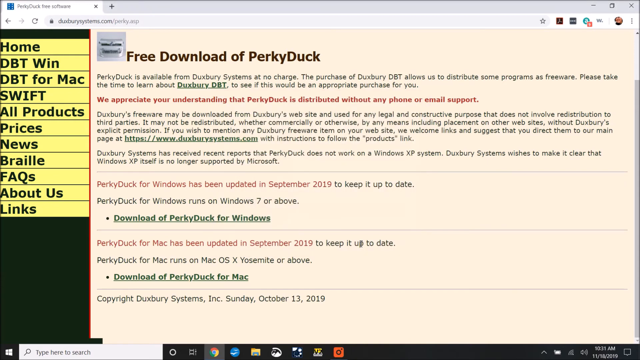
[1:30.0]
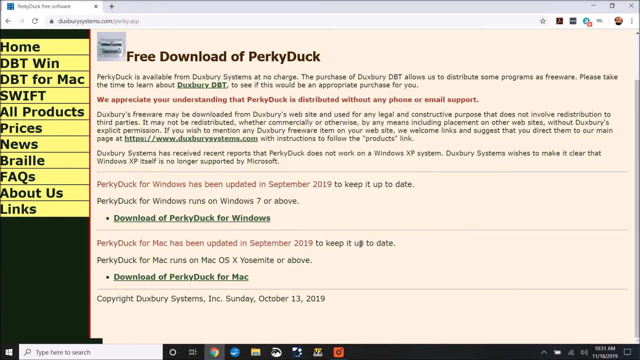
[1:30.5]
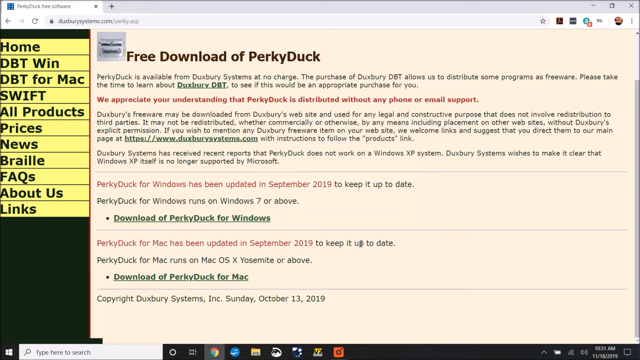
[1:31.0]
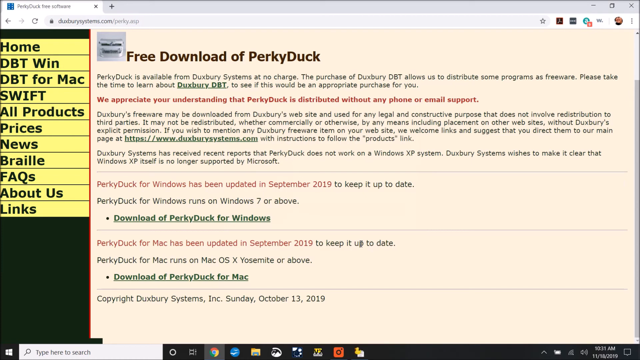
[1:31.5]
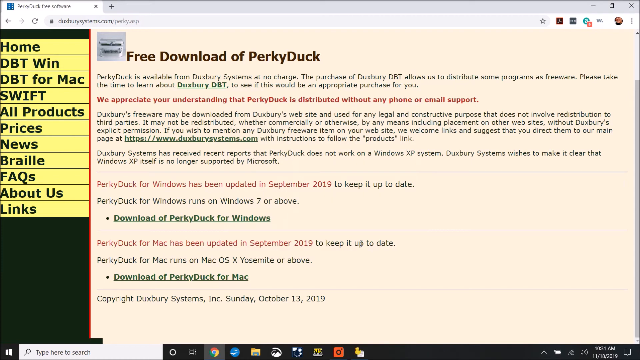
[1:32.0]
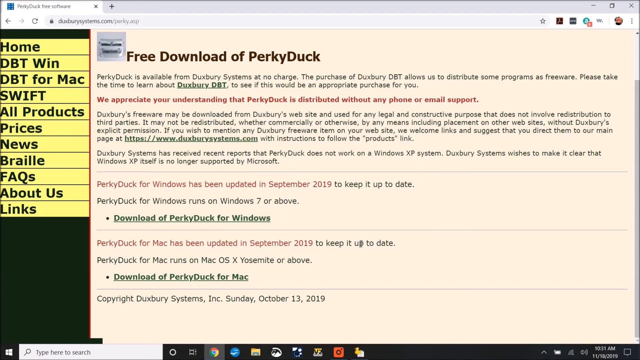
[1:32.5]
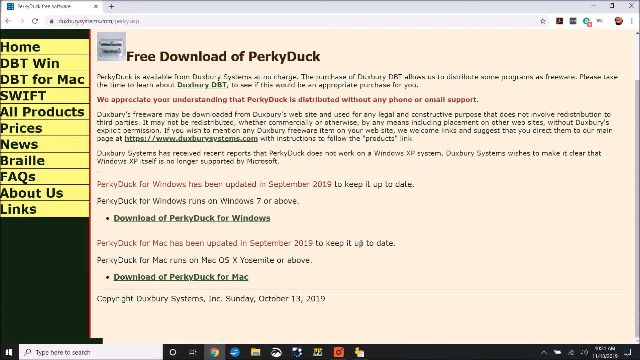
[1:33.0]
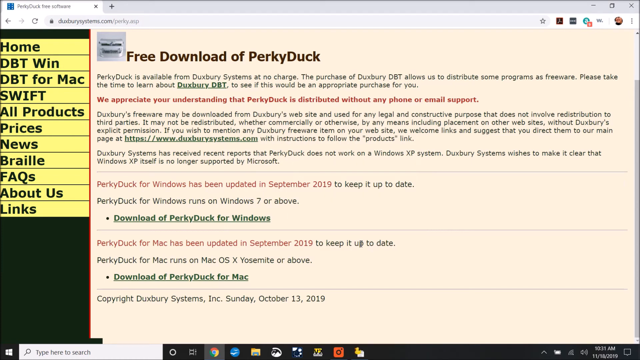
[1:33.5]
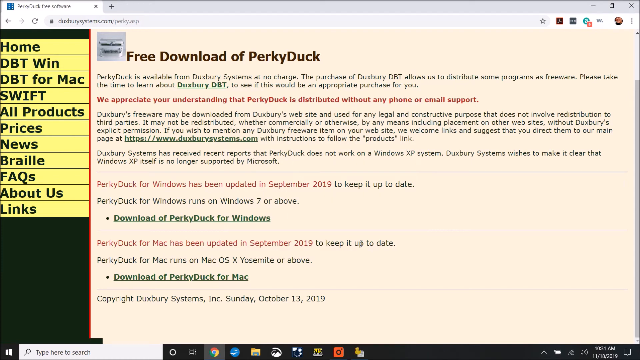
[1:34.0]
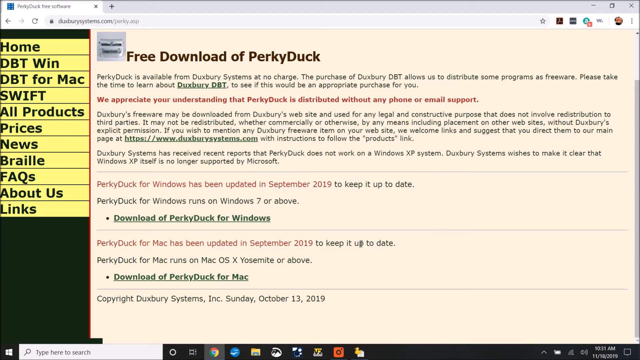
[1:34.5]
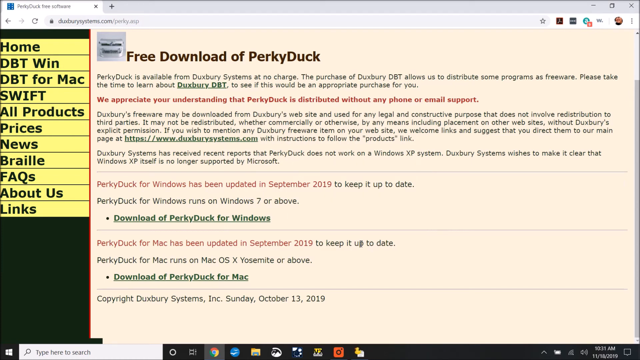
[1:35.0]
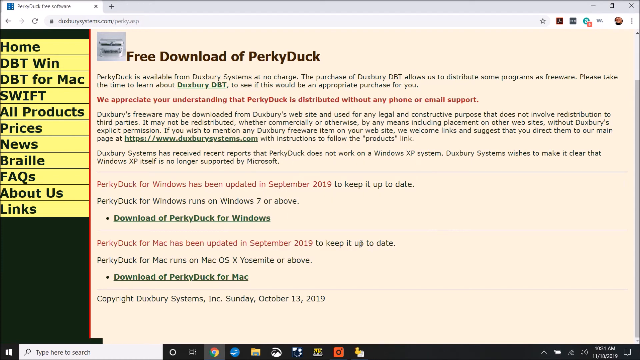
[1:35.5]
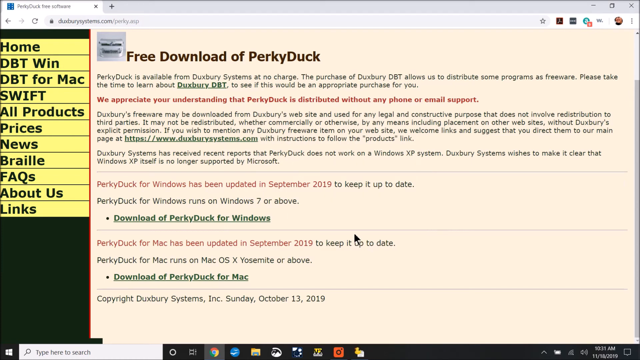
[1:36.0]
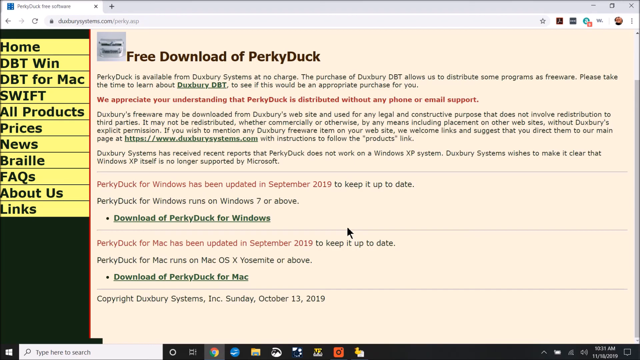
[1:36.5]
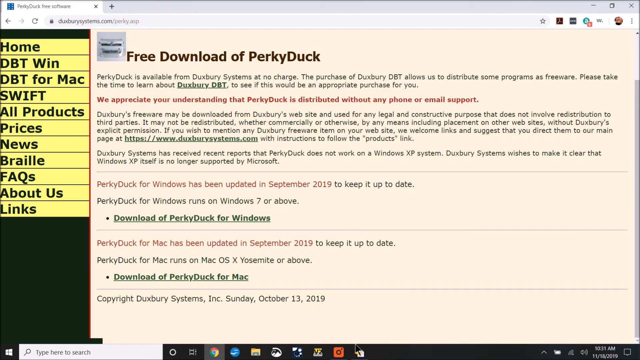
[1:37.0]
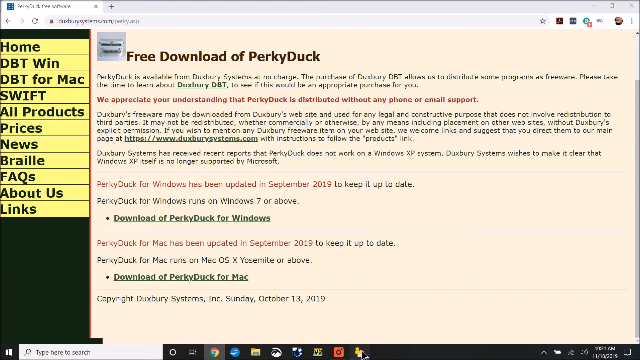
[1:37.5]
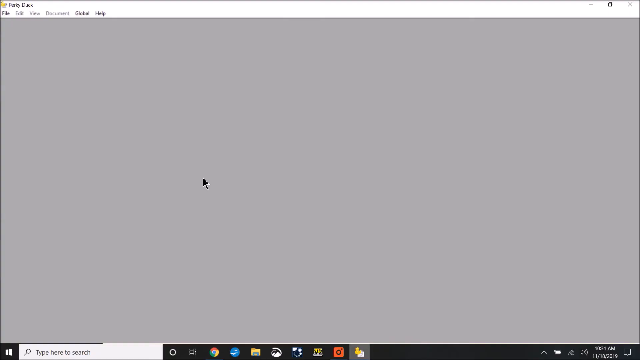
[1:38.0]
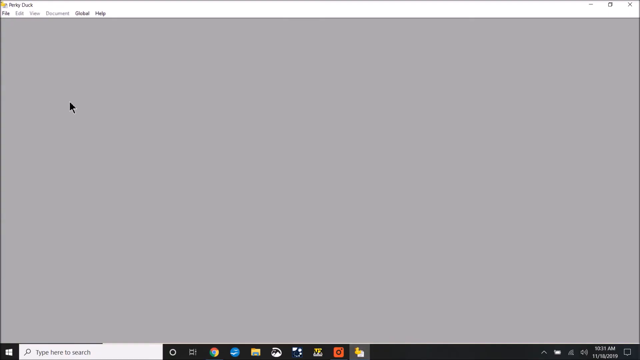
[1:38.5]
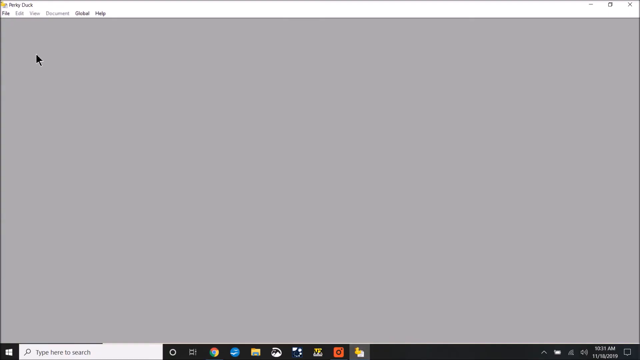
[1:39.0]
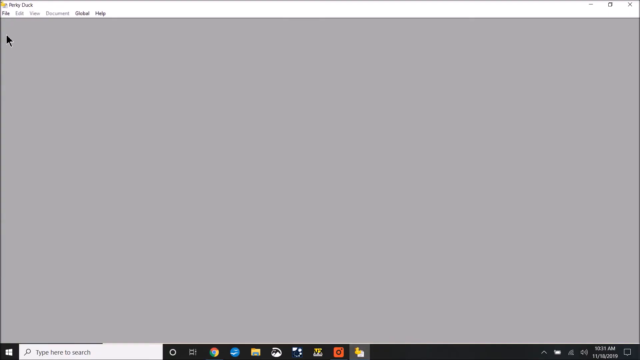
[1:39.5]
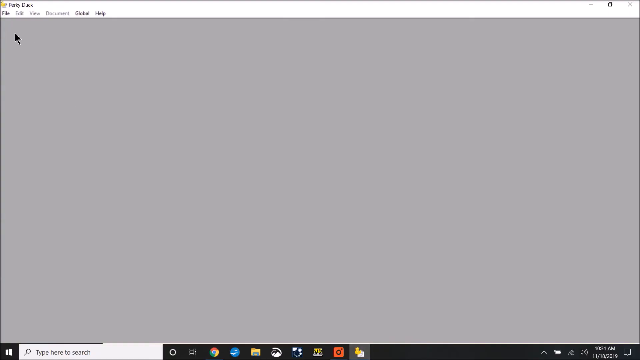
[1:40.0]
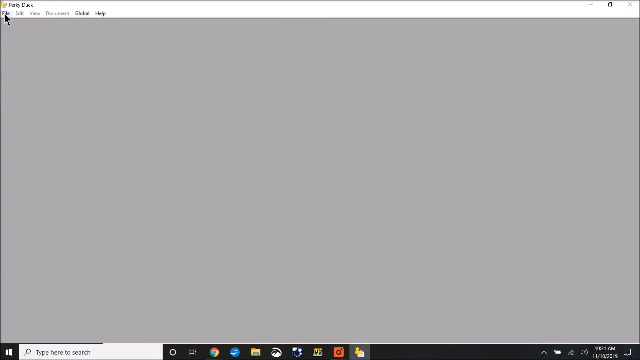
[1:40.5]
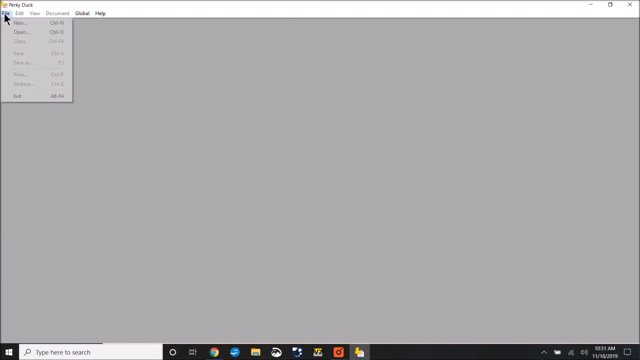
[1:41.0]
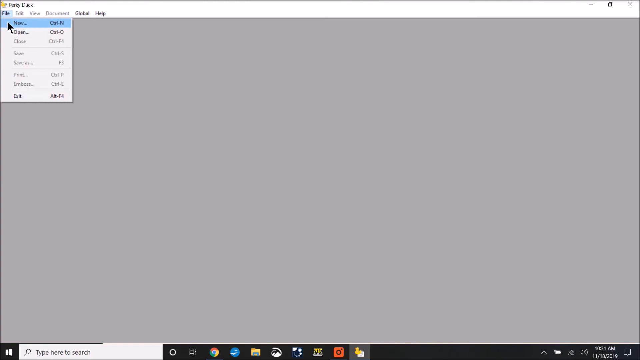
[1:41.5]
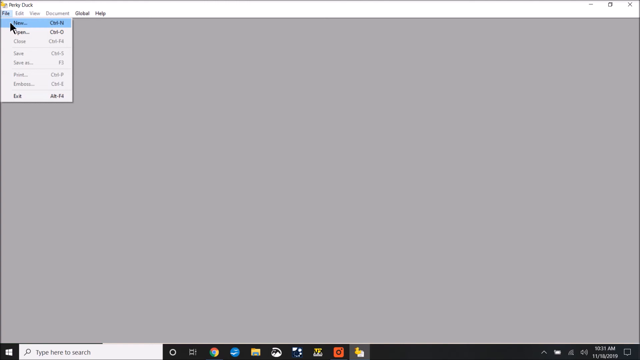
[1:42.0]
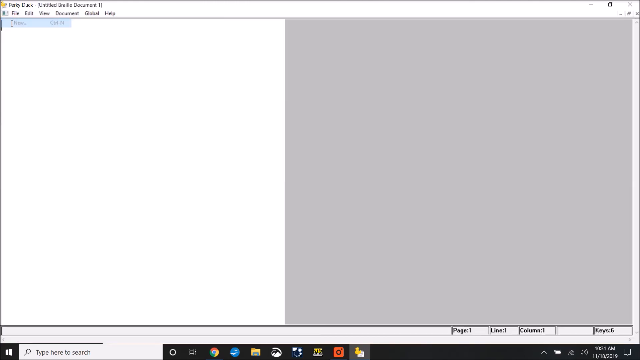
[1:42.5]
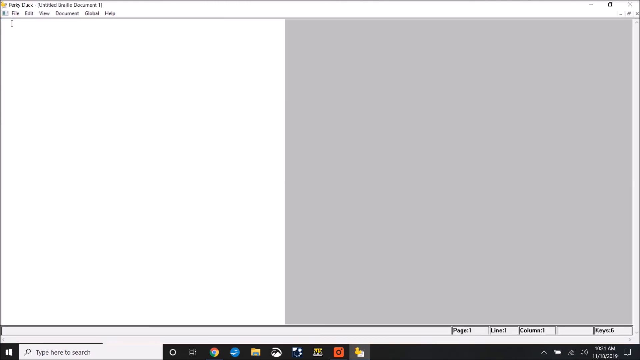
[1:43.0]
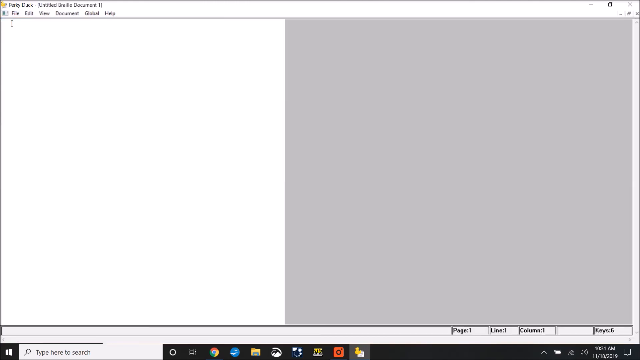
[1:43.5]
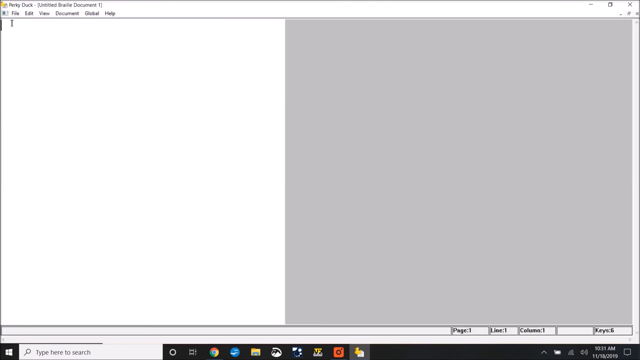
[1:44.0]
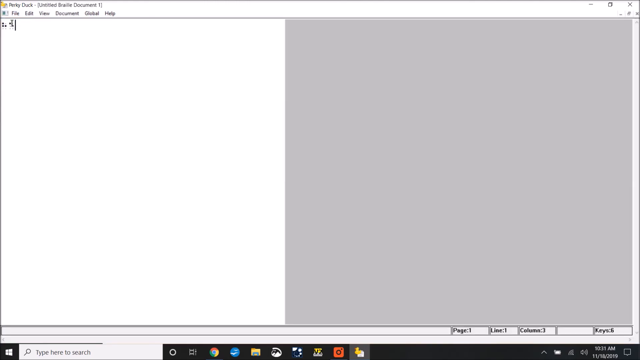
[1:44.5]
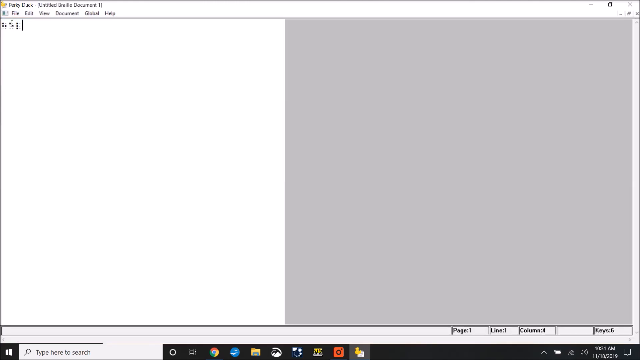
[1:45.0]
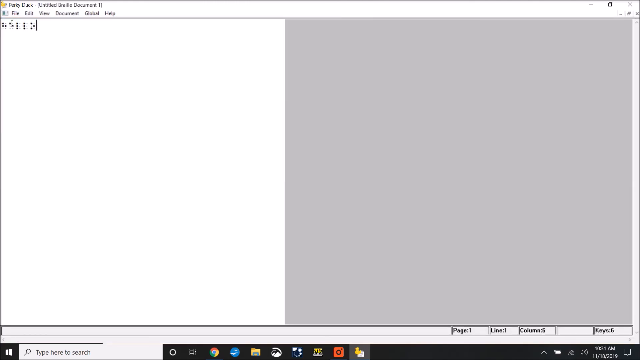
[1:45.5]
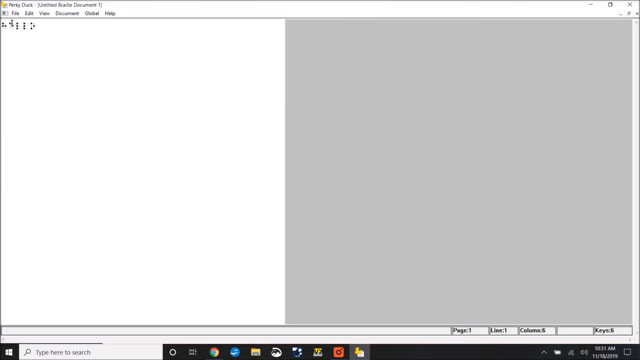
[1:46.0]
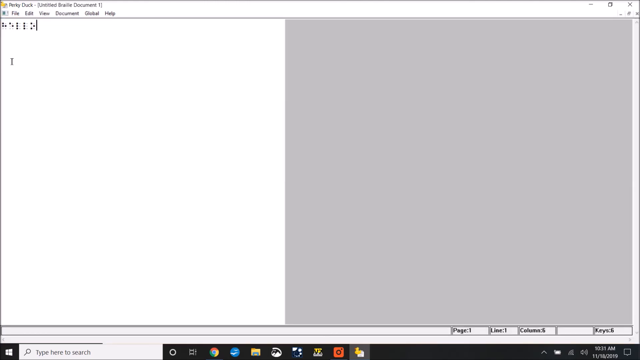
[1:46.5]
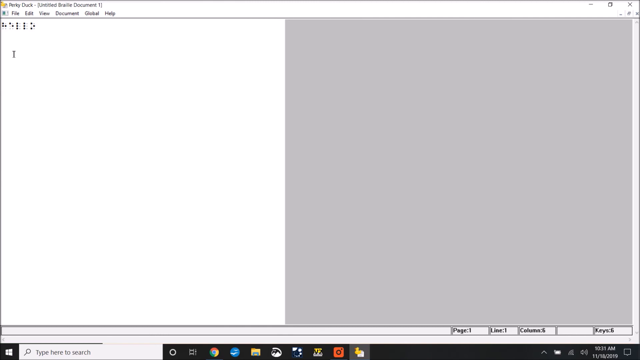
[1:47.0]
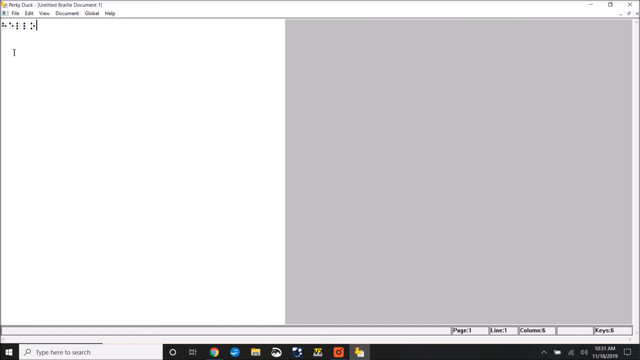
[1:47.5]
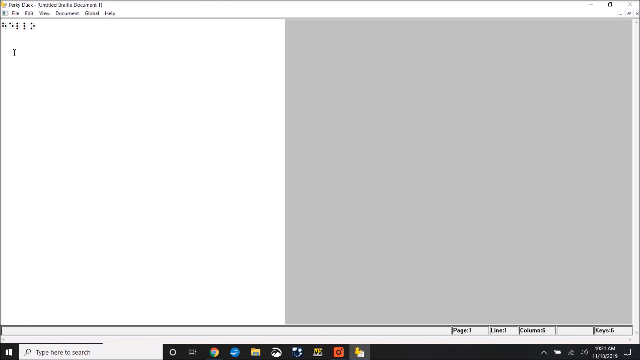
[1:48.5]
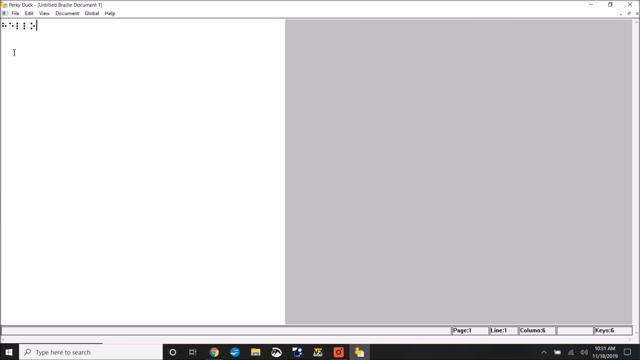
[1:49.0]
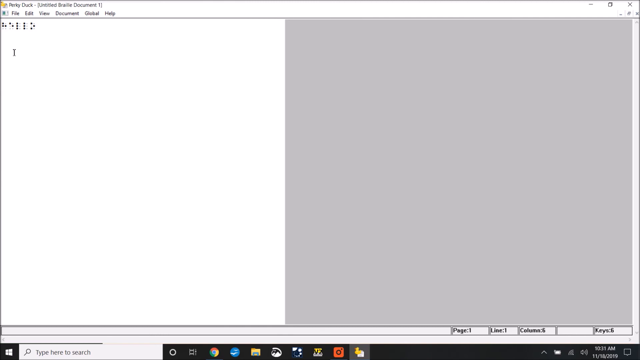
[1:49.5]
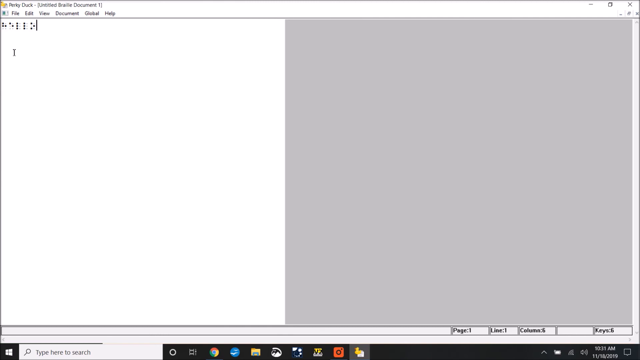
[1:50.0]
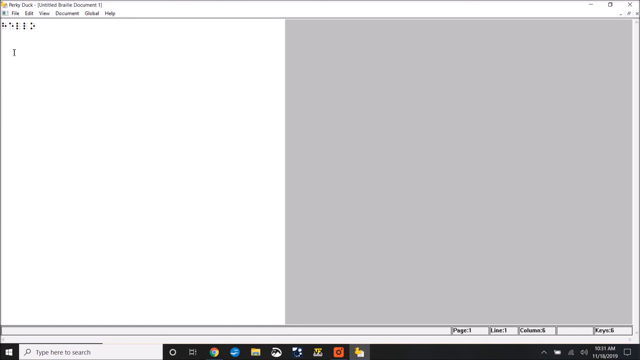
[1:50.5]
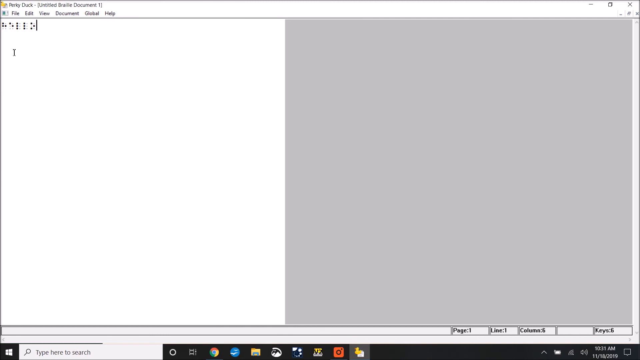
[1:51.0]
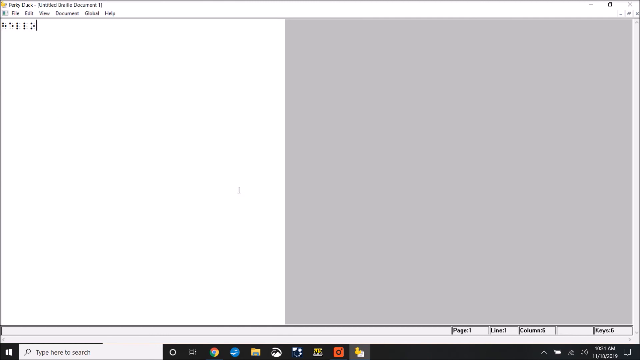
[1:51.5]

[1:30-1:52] After Finish is clicked, the view returns to the Perky Duck free download page. An icon appears in the bar at the bottom, and the application launches, filling the entire screen. The menu options at the top left read "file", "edit", "view", "document", "global" and "help", with edit, view and document grayed out. The main application area is a big gray rectangle with nothing showing. The user moves up to File and clicks New, which opens a blank white page, almost like a Word document, with a cursor indicating that text can be typed. The user starts typing and Braille appears; four letters are typed.